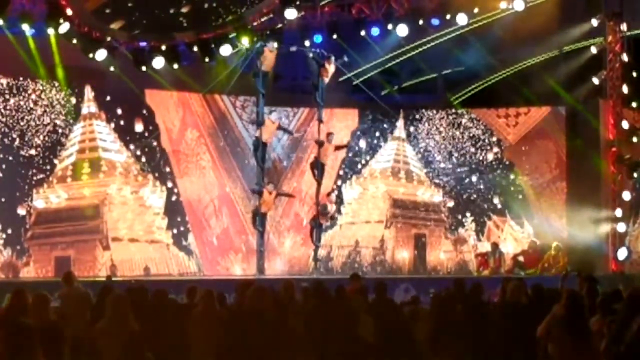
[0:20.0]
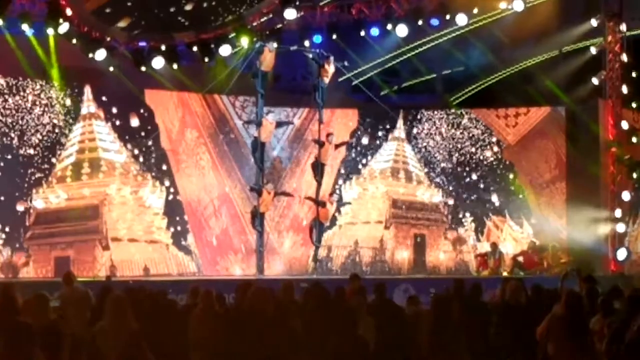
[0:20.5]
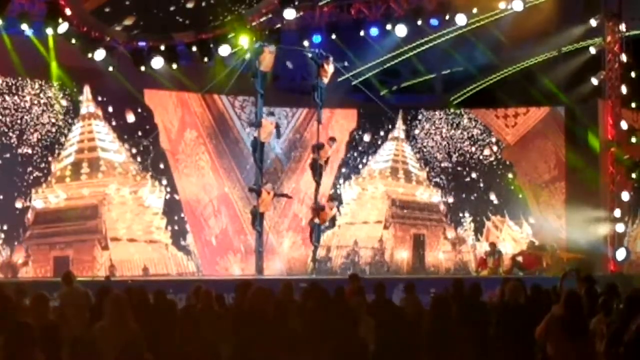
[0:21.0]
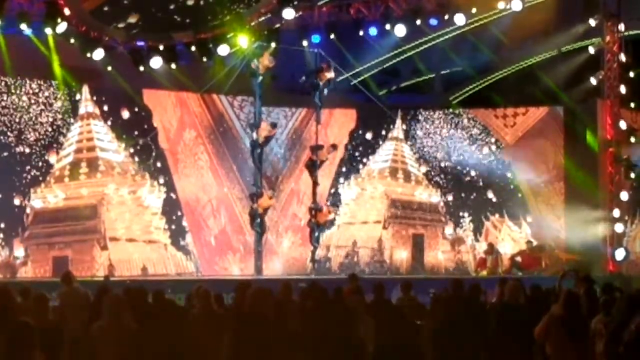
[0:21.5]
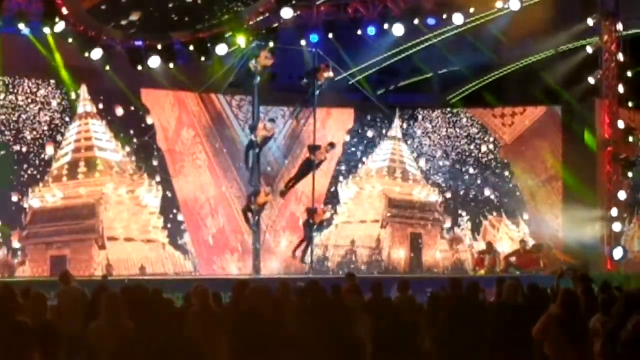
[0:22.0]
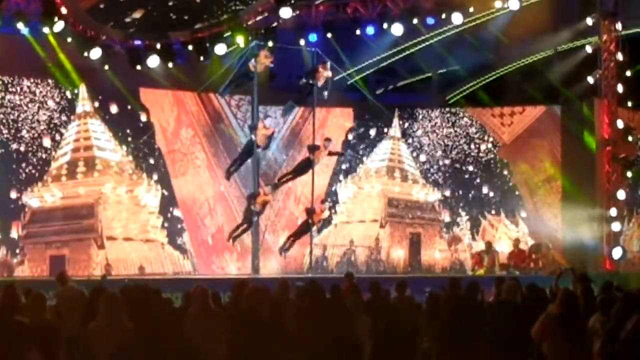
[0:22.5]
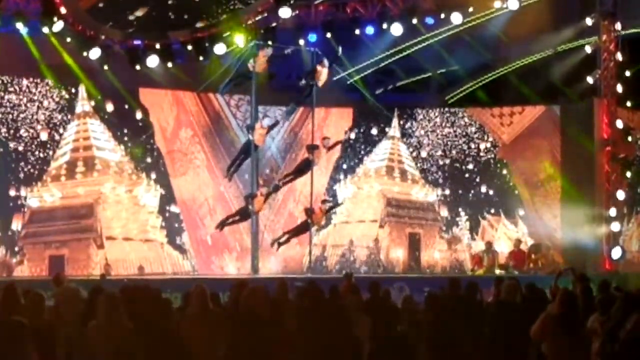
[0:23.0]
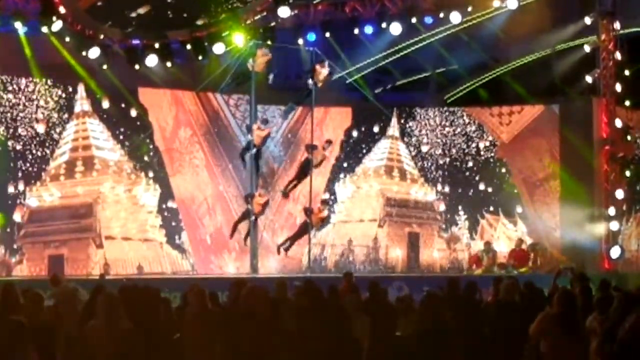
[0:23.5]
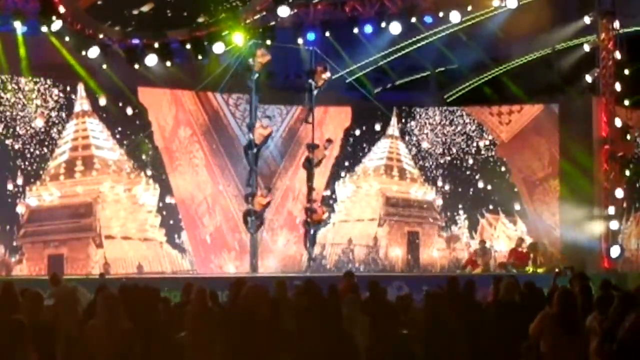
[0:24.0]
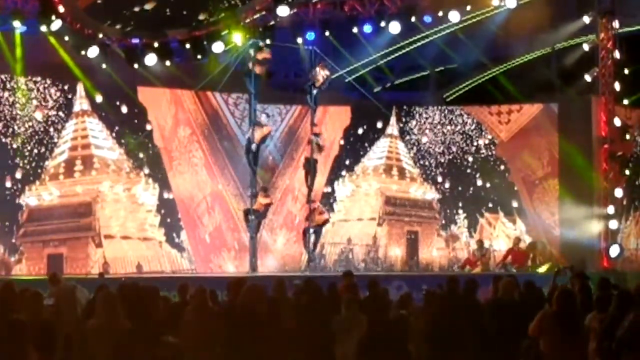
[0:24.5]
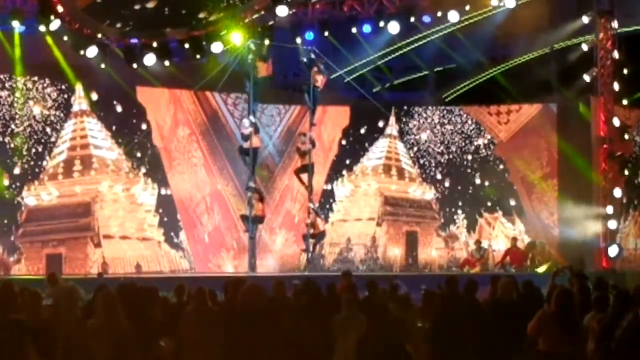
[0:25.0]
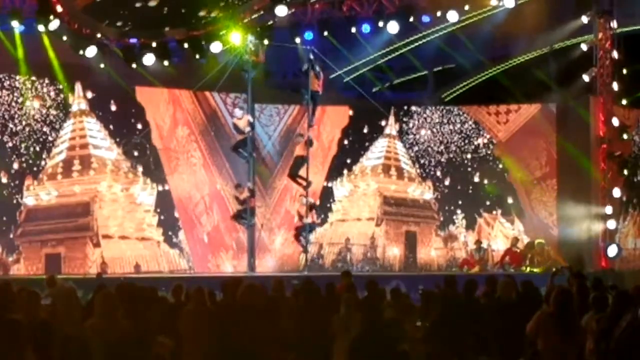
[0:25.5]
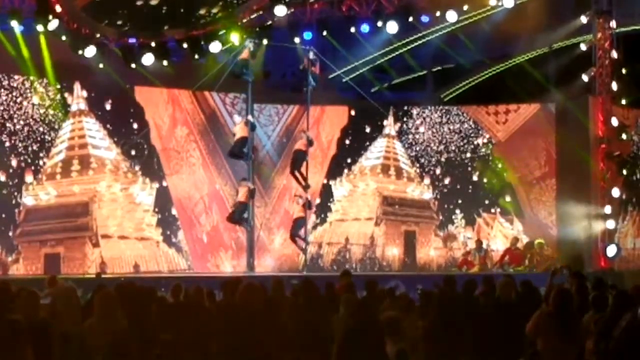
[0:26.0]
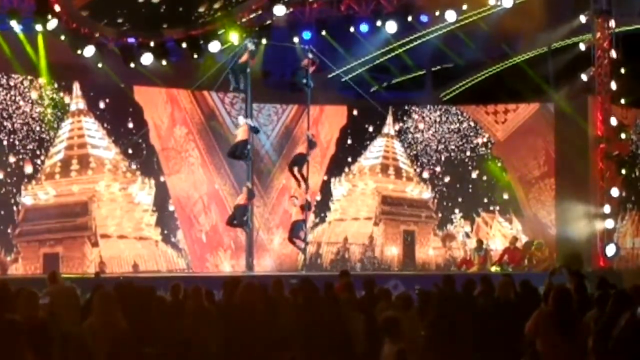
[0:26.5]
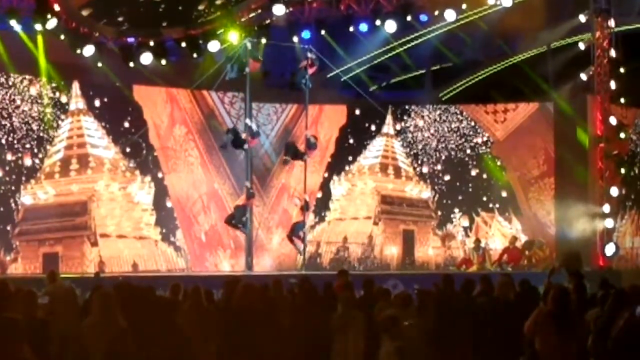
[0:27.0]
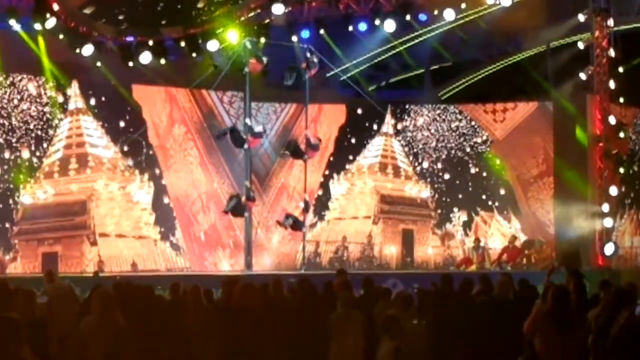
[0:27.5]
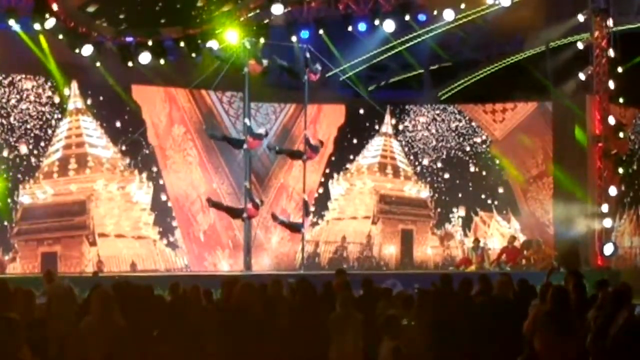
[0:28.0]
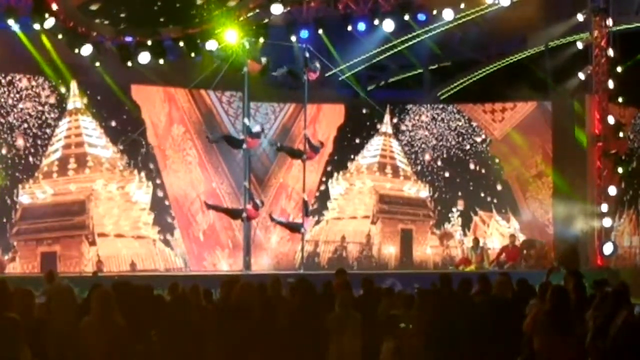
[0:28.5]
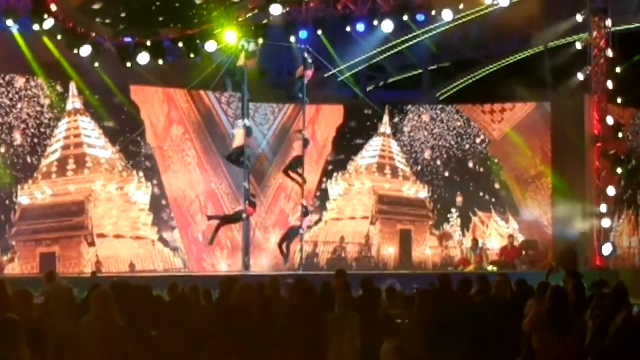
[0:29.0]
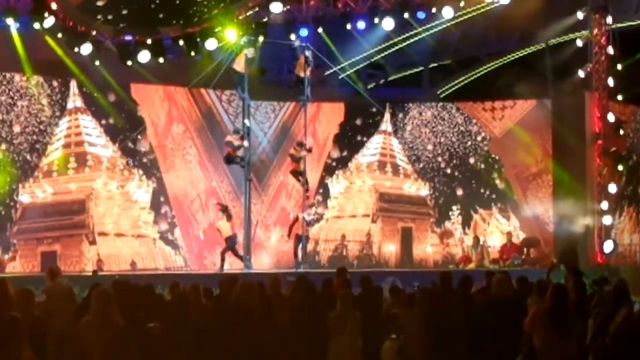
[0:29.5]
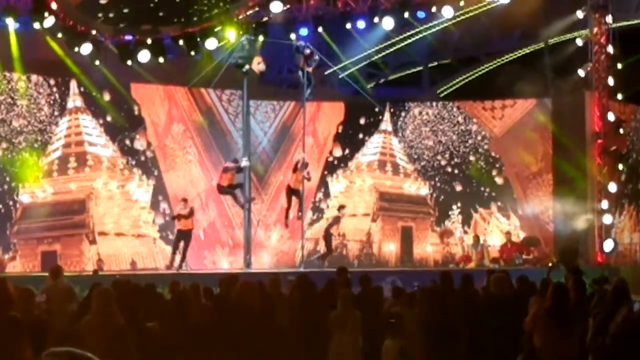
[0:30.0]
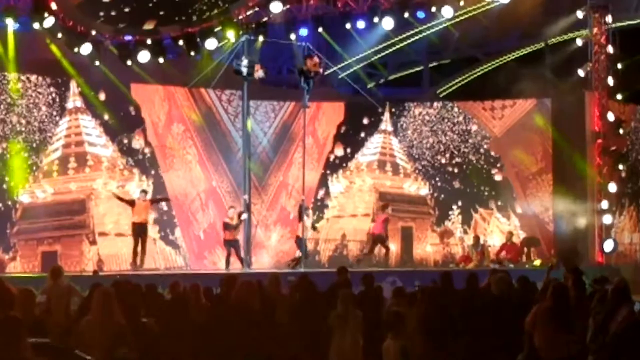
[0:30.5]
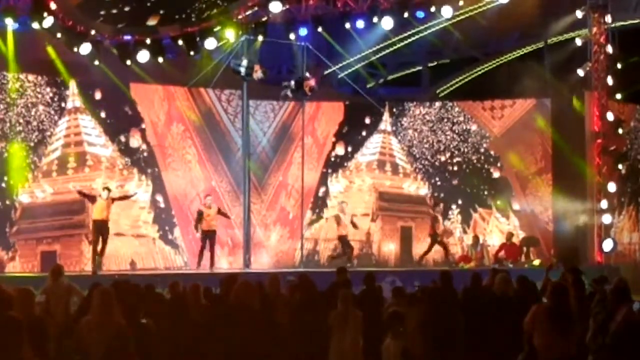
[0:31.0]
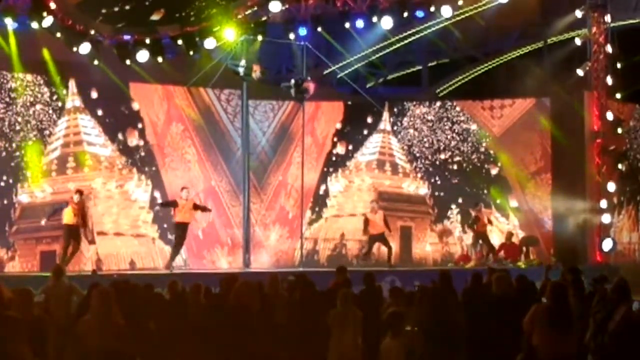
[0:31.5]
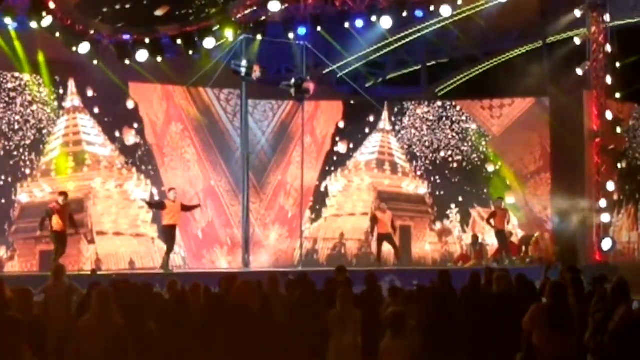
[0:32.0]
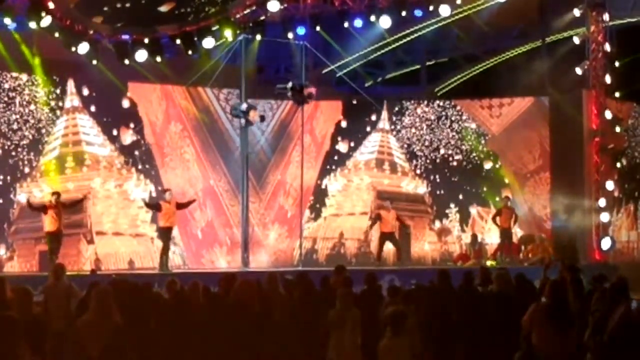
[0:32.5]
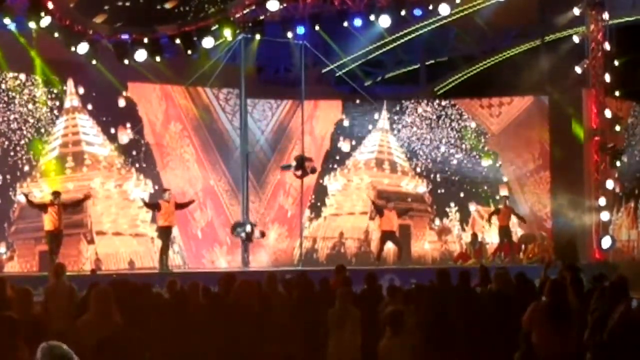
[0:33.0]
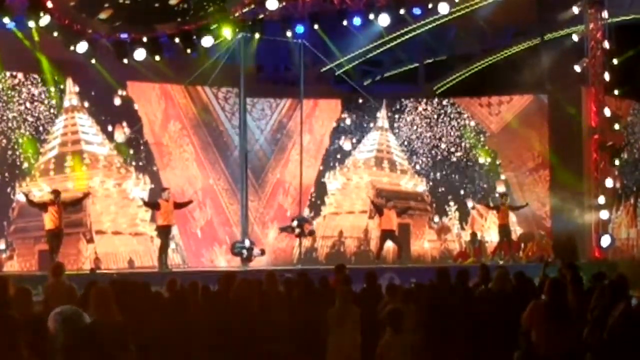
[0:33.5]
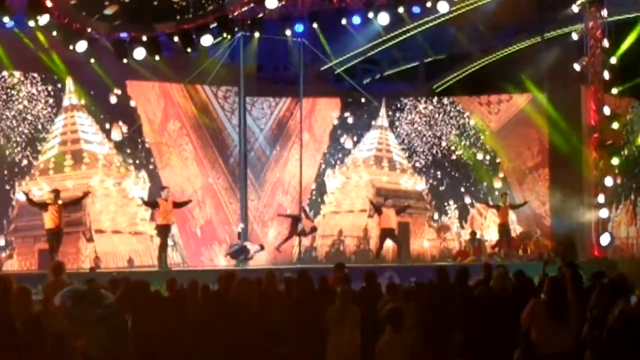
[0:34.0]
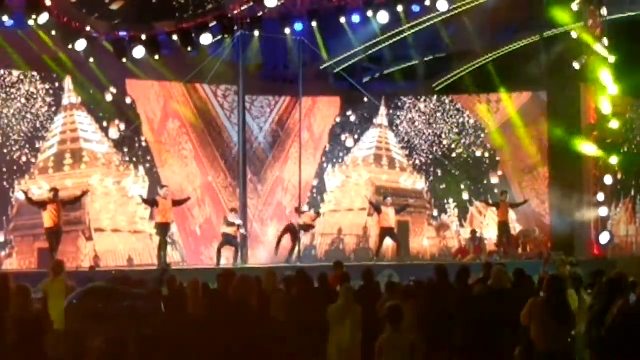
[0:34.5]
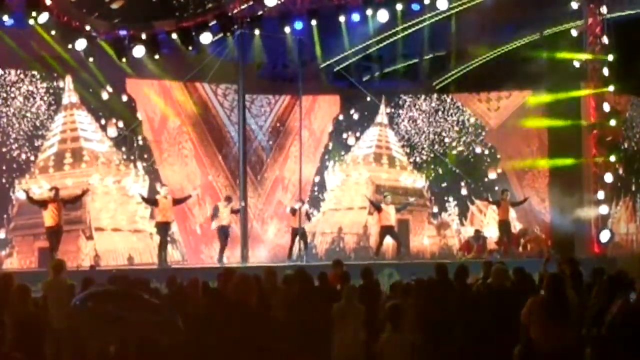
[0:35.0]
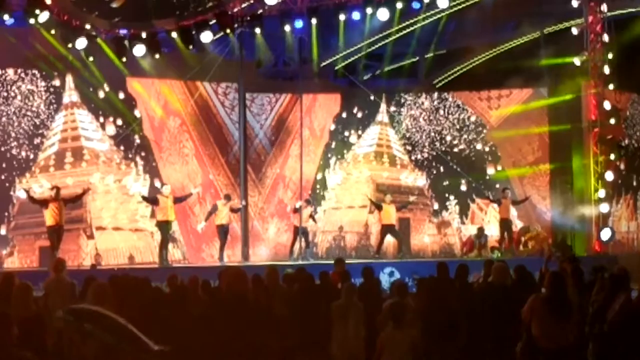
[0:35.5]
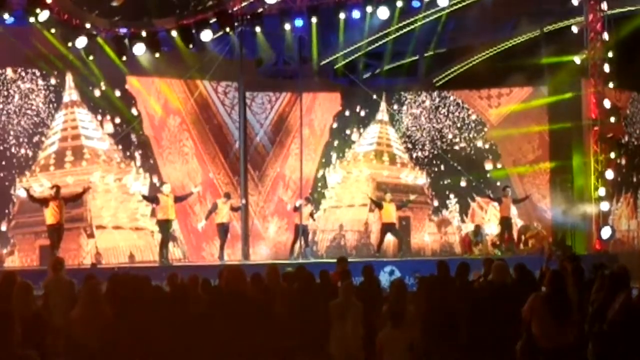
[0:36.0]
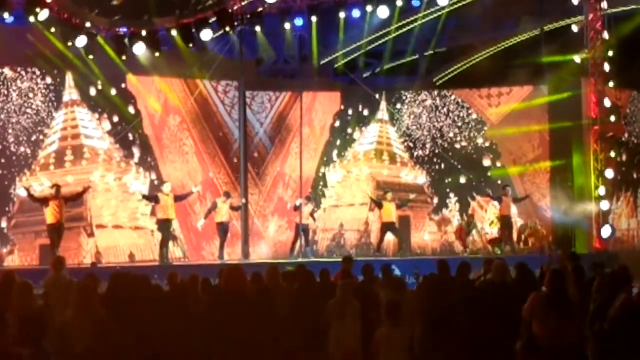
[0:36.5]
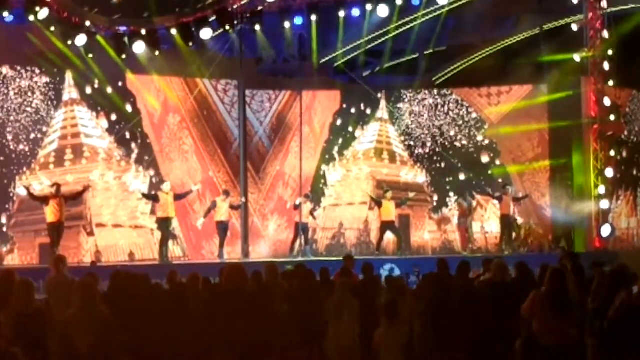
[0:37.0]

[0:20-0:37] Six people show their skills while hanging from something very long. Many people watch and enjoy the show, which seems to be a magic show or possibly part of a program presented to an audience.